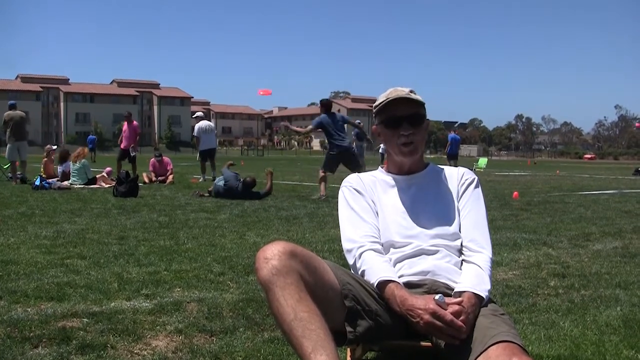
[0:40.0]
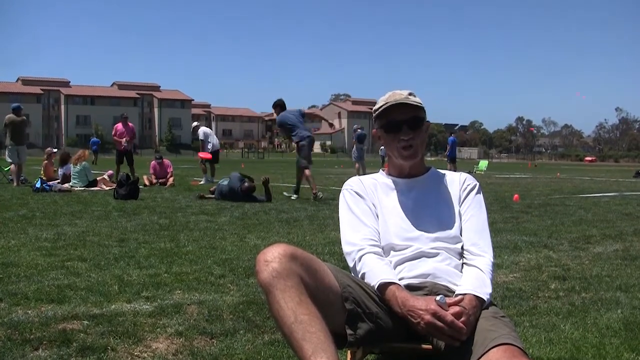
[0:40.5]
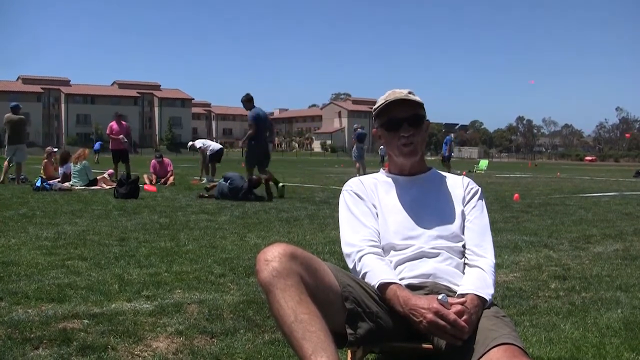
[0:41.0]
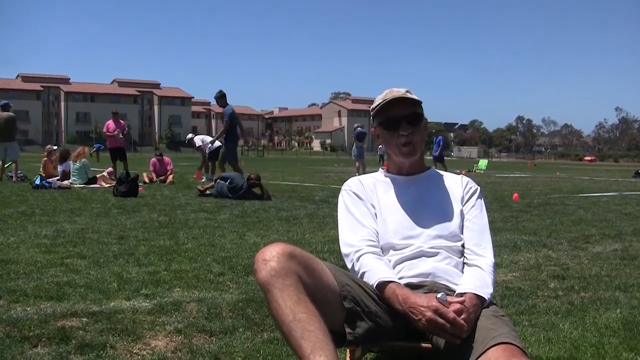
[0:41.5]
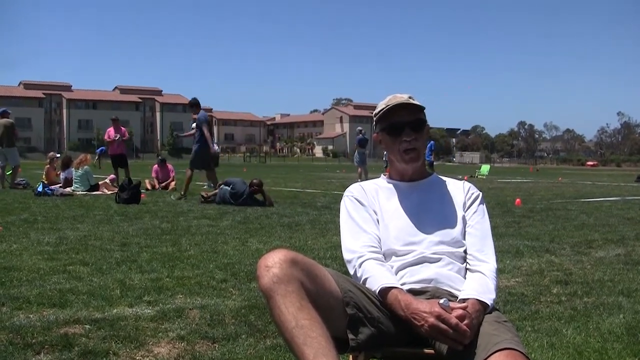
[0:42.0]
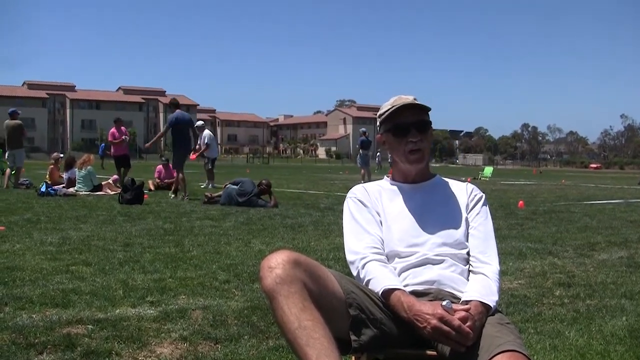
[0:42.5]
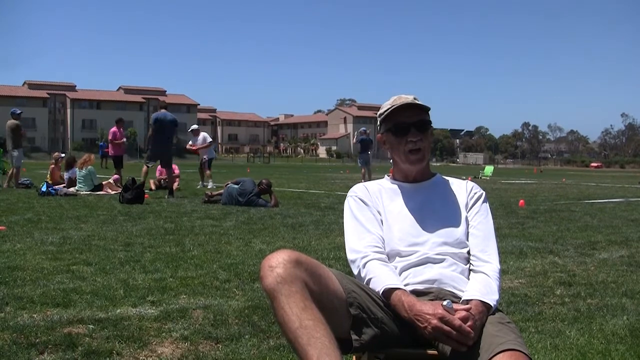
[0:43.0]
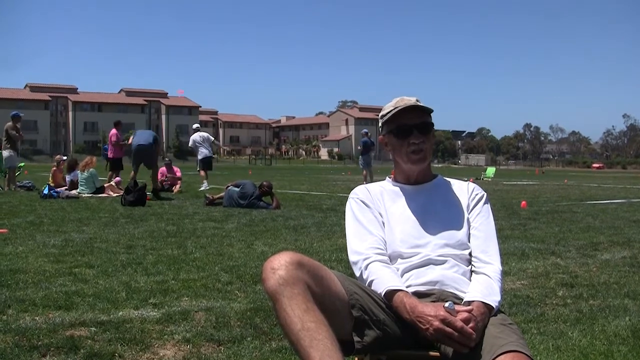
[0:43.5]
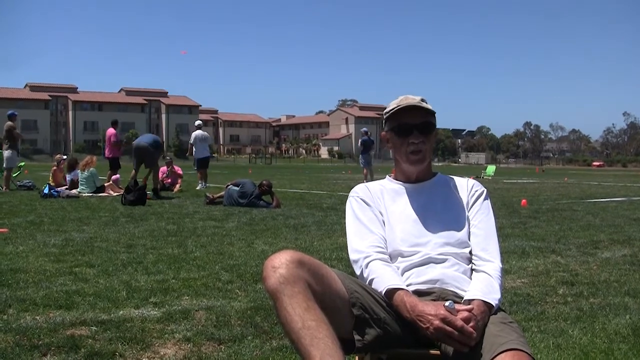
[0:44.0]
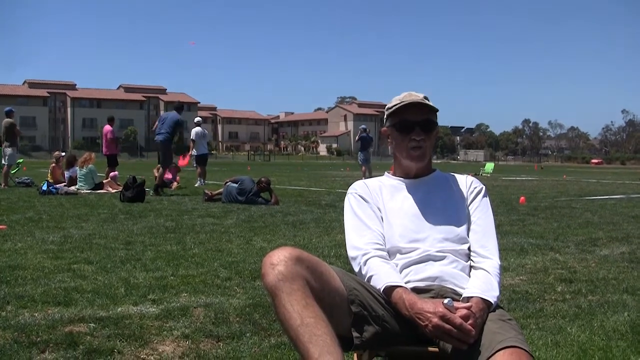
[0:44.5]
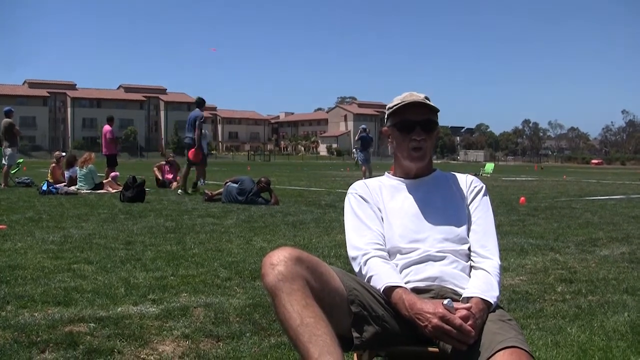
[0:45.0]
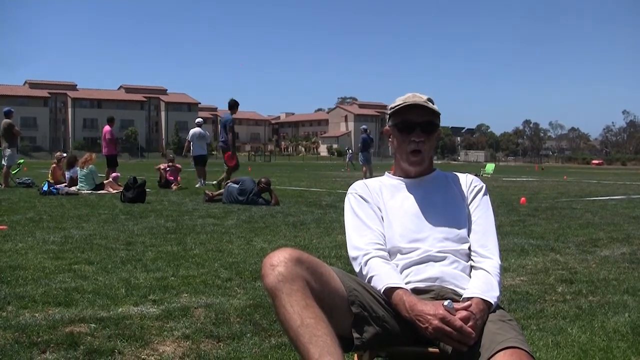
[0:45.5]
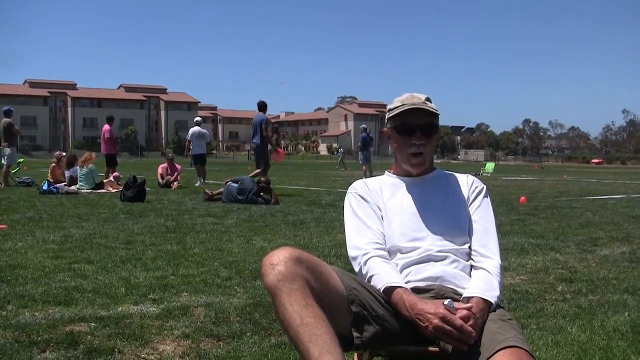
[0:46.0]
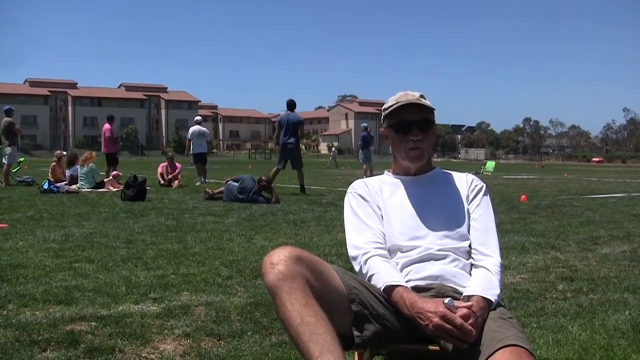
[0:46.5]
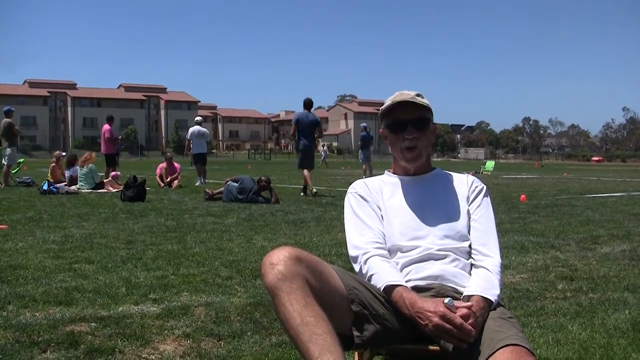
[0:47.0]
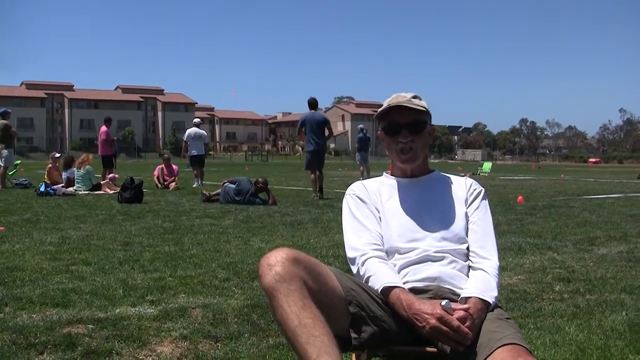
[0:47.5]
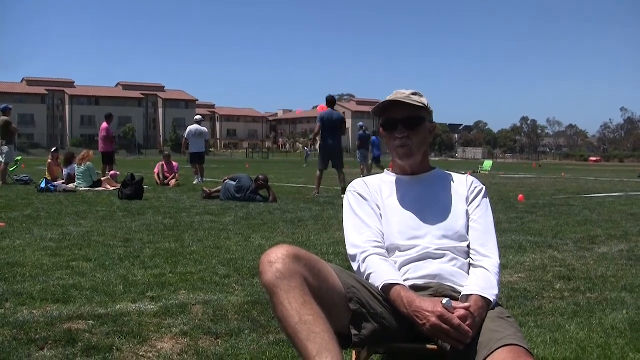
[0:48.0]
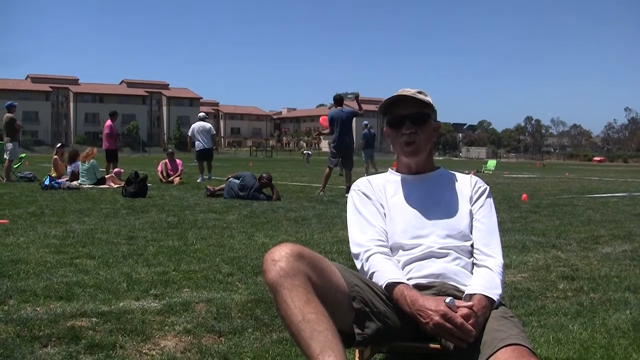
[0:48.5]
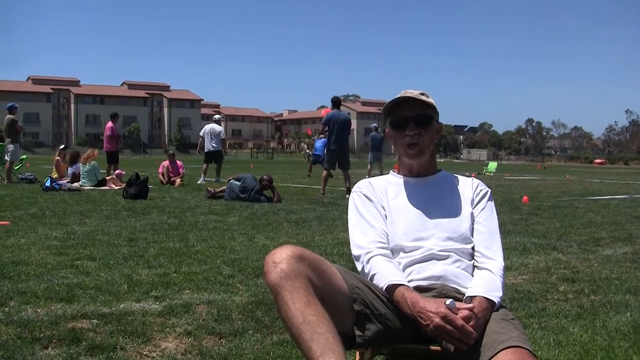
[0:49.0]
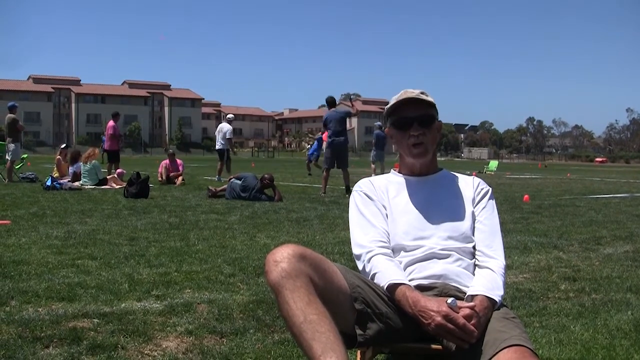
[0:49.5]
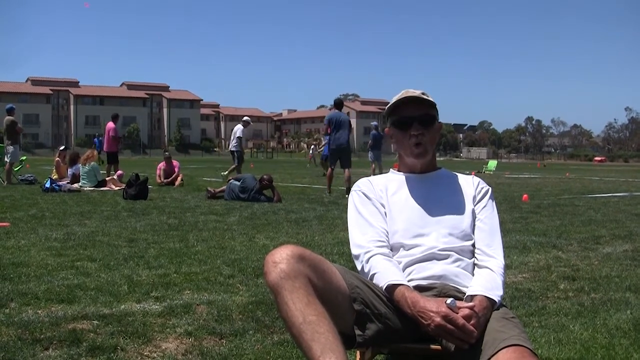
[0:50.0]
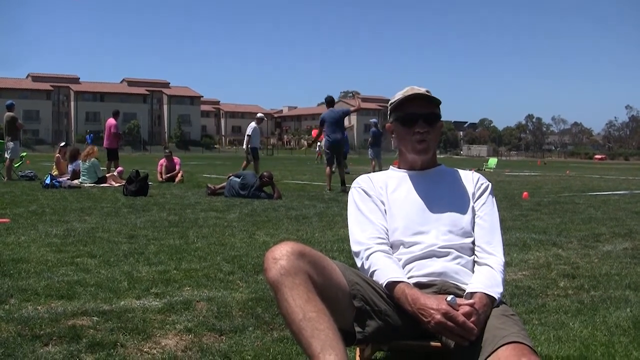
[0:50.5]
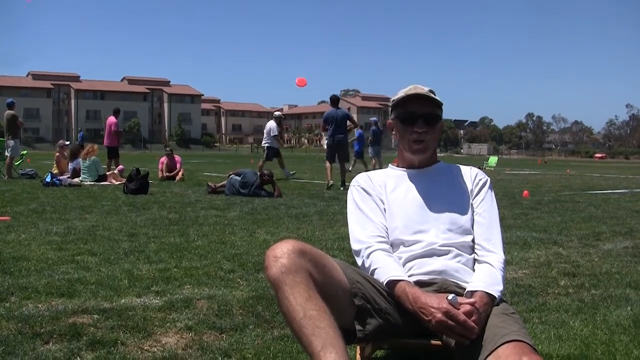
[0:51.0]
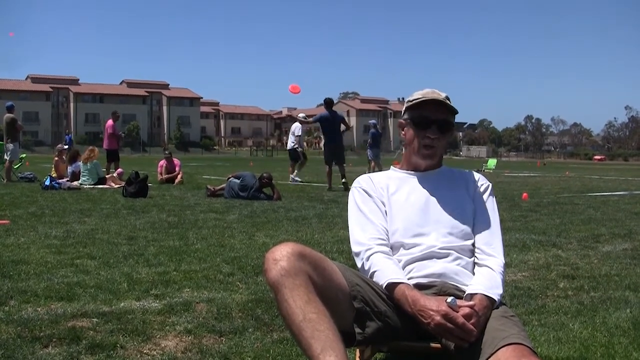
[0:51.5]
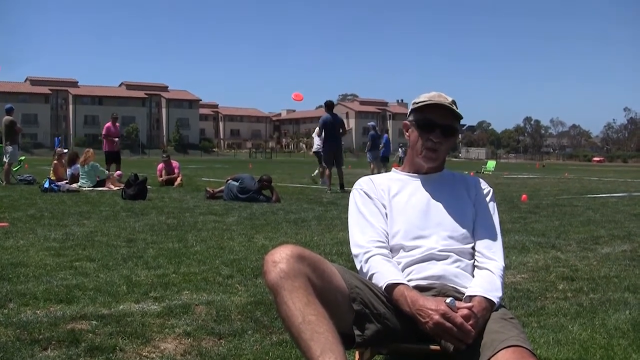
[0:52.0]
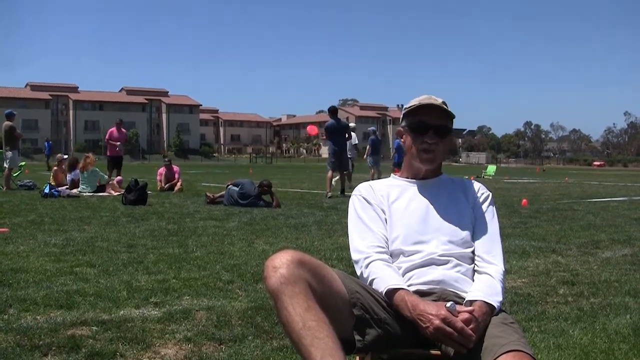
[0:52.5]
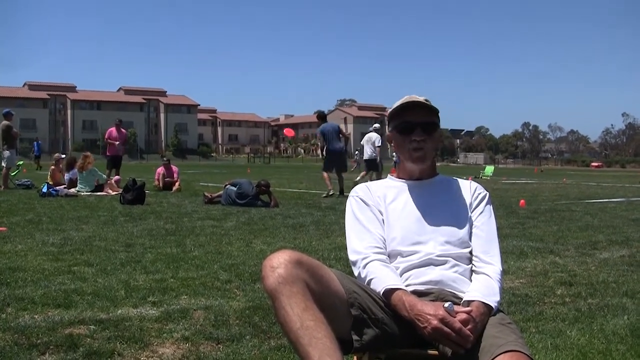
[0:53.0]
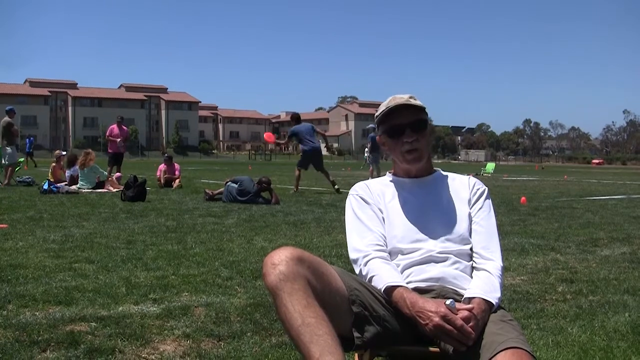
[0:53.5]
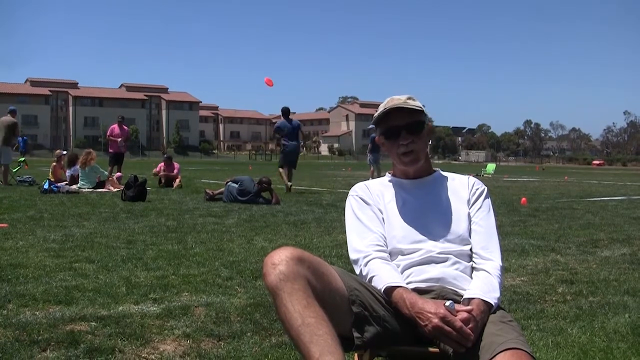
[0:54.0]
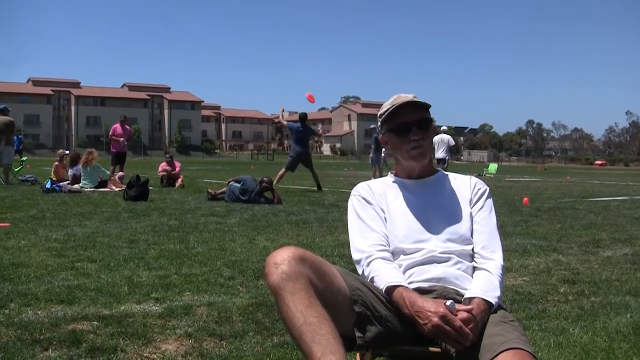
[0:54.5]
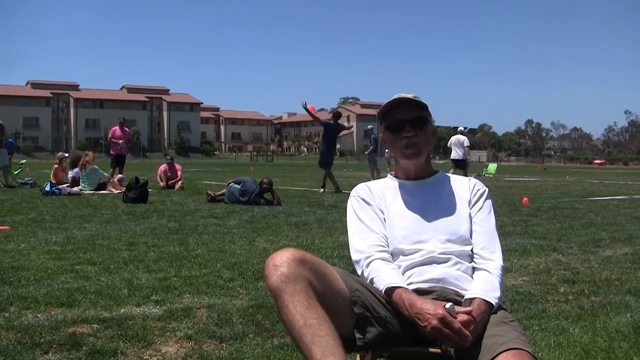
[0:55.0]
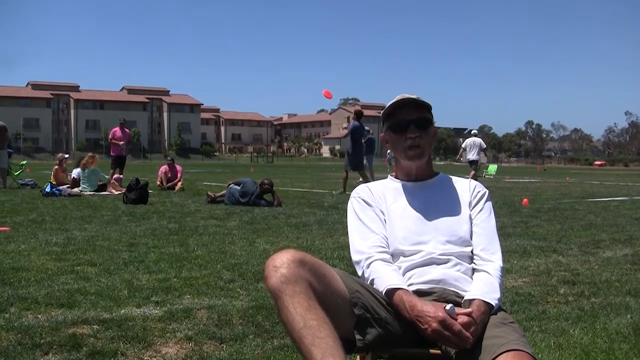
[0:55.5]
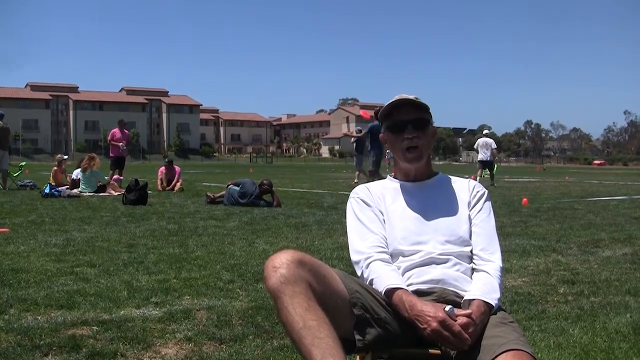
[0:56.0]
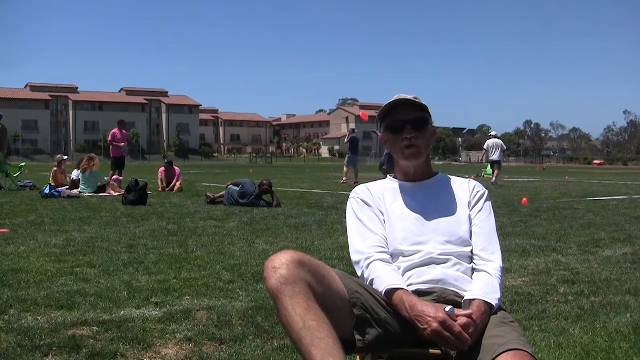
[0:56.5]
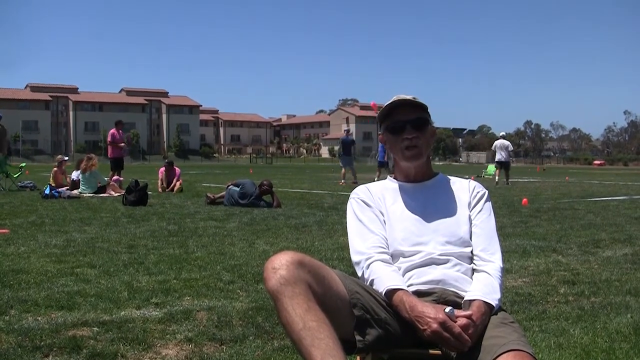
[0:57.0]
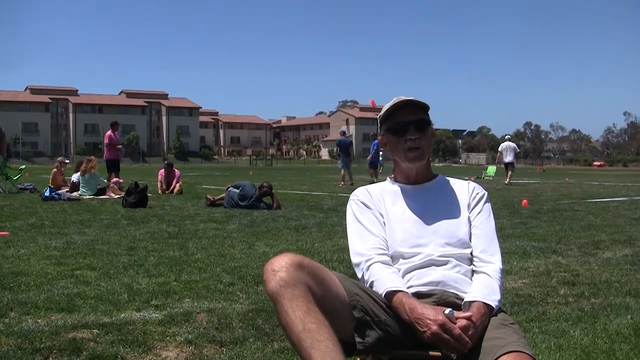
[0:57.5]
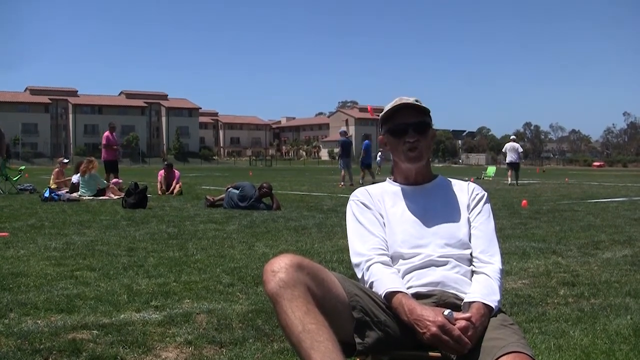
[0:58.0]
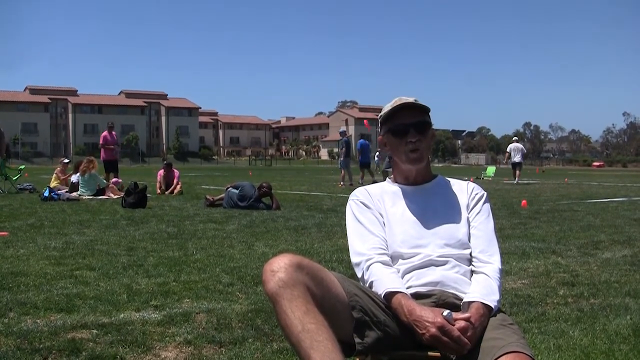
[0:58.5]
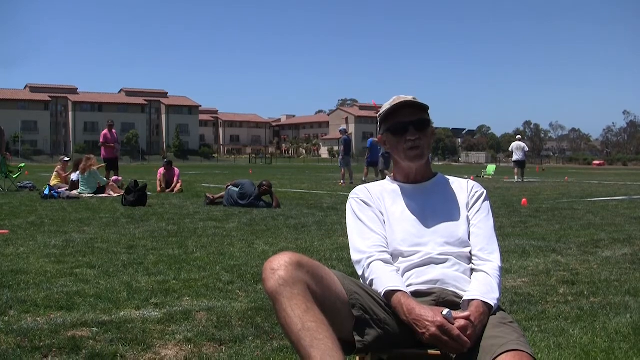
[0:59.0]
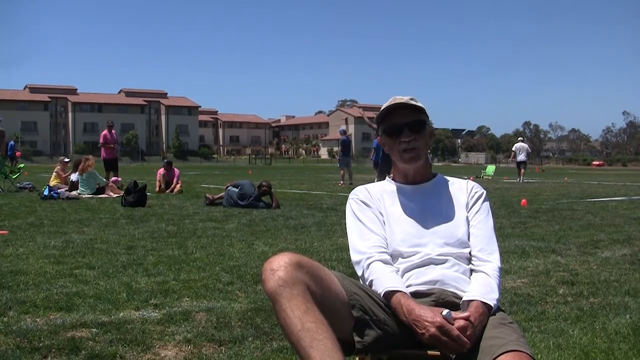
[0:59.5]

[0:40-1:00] Tom Kennedy is still responding to the interview question. The interviewer seems to be holding a camera phone, as the shot is not stable or steady and moves a little. In the background, the young man in the dark-colored shirt and shorts who was tossing the Frisbee around by himself, rolling and rotating it between his left and right hands and off his body, drops the Frisbee to the ground near a group sitting on what looks like a brightly colored, possibly yellow, blanket. In that group, one woman has red hair and a red shirt, another appears to be a teen or young adult with a white shirt and dark hair, and another person wears a visor. He walks over and picks up the Frisbee near them. A Black man lies relaxed on his right side on the field, his head propped up with his right arm. A person in a bright pink shirt is kicked back on the field, relaxing, with one leg out and one leg bent up toward their body. Another person in a similar hot pink shirt is looking out at what the other people on the field are doing. Across the field, a pair in royal blue shirts and dark shorts throw the Frisbee to each other across the field, not down it, at high speed and with a lot of force.